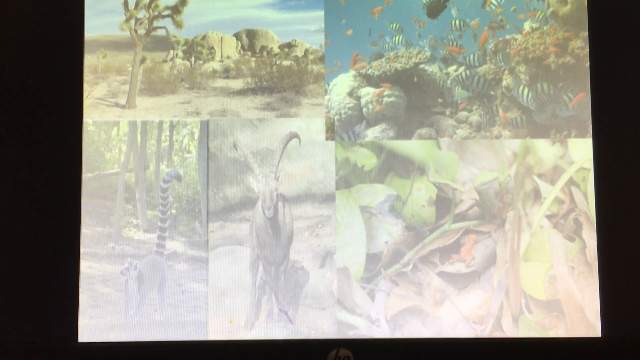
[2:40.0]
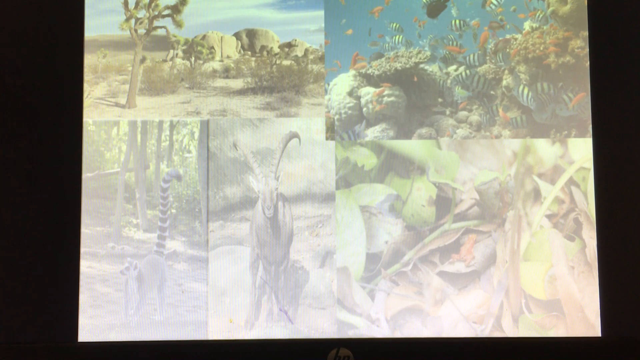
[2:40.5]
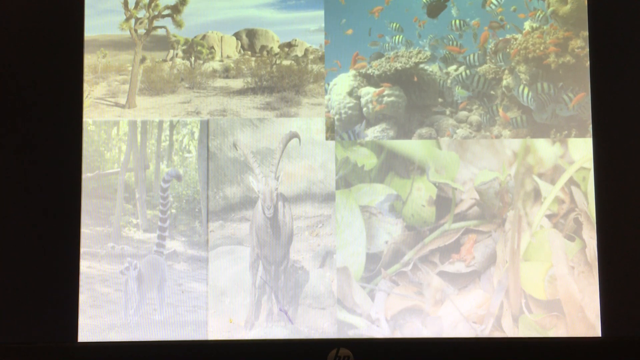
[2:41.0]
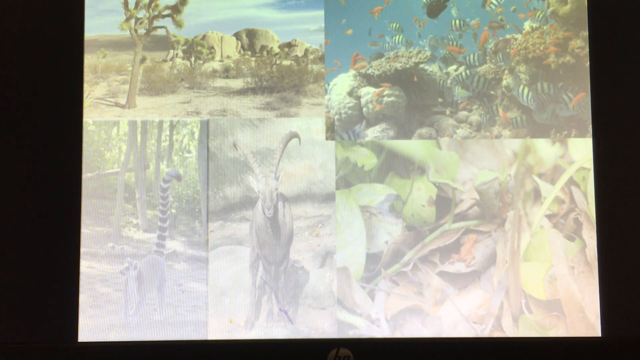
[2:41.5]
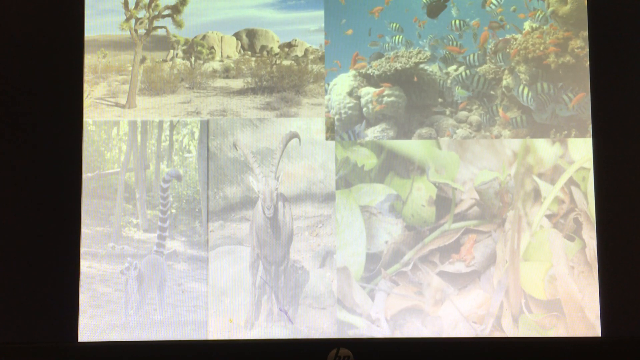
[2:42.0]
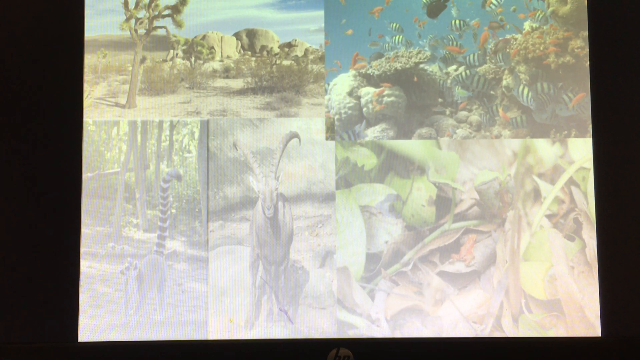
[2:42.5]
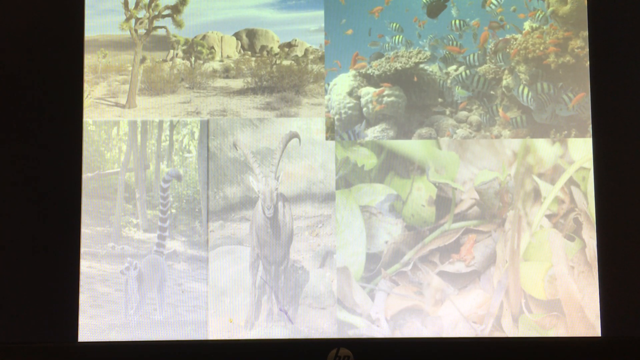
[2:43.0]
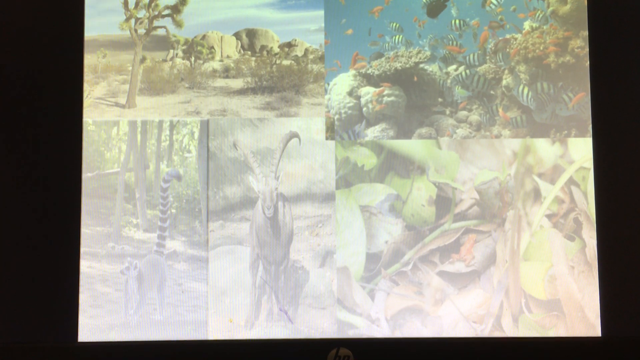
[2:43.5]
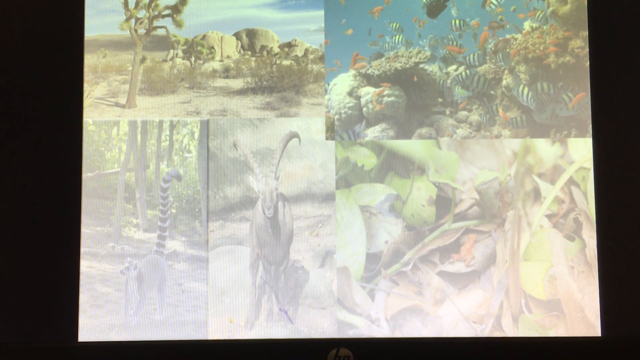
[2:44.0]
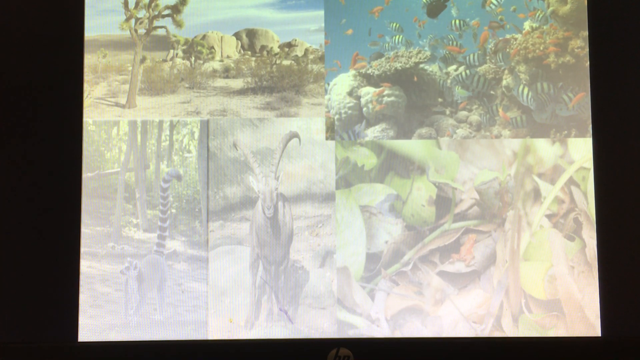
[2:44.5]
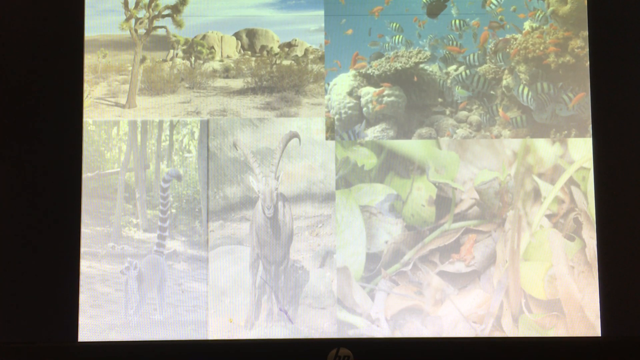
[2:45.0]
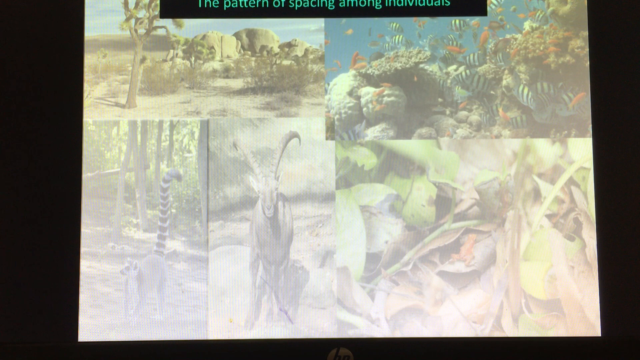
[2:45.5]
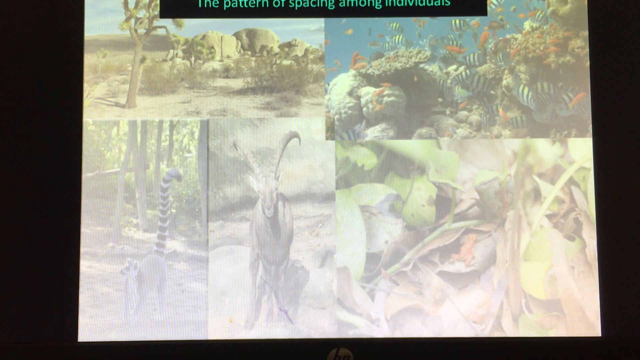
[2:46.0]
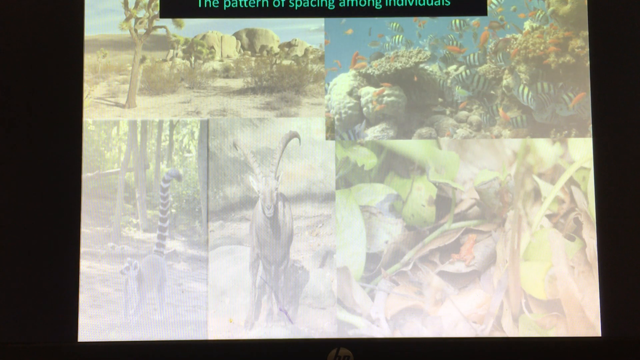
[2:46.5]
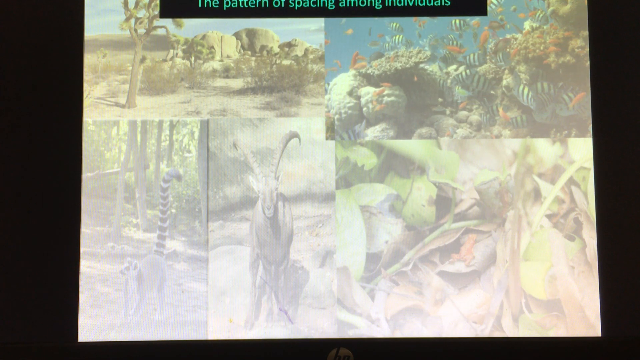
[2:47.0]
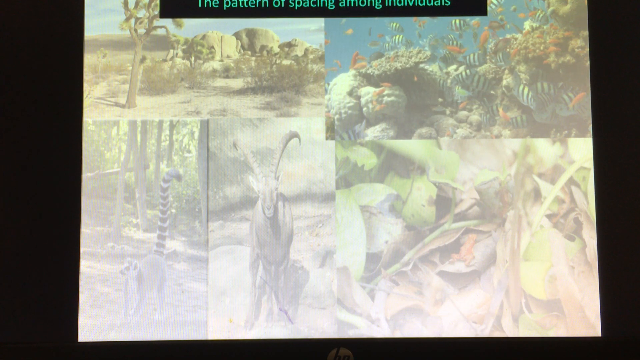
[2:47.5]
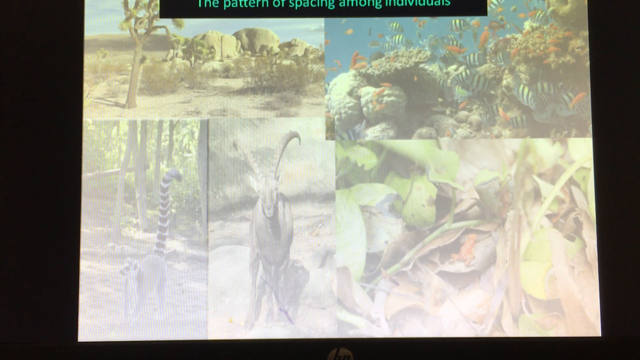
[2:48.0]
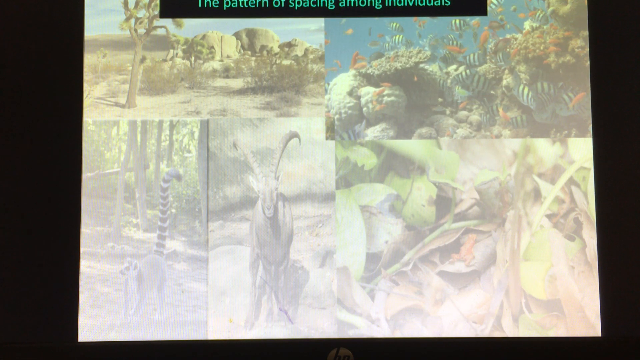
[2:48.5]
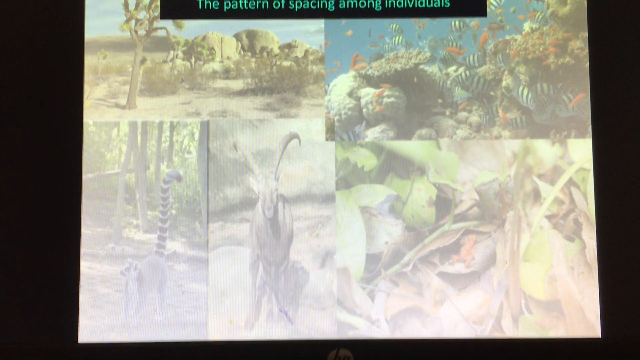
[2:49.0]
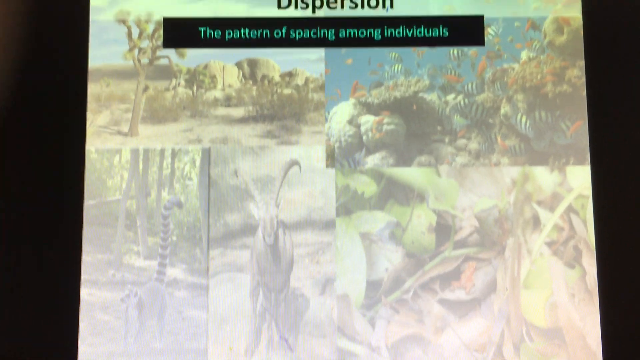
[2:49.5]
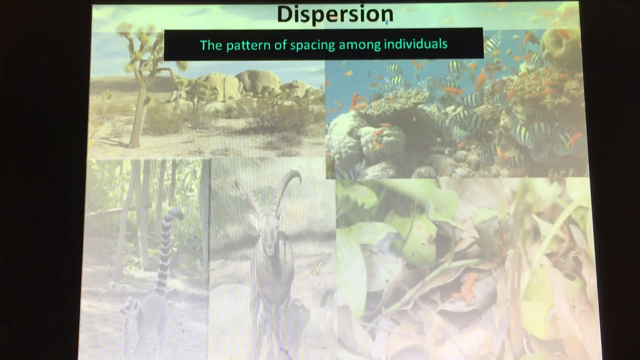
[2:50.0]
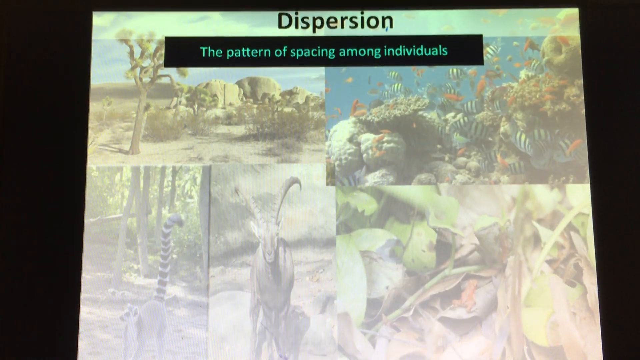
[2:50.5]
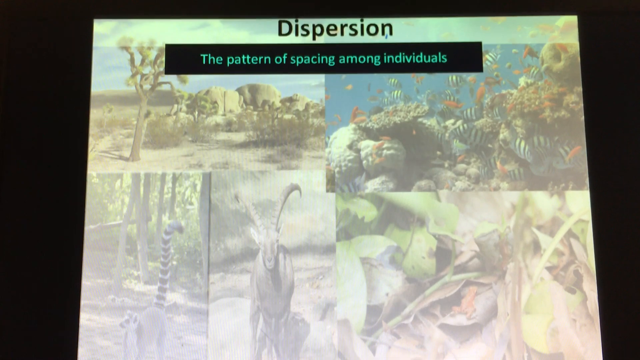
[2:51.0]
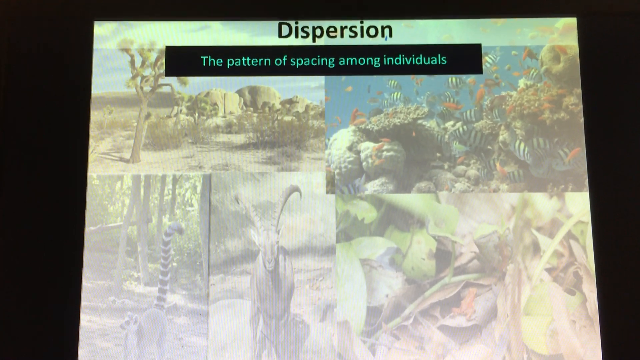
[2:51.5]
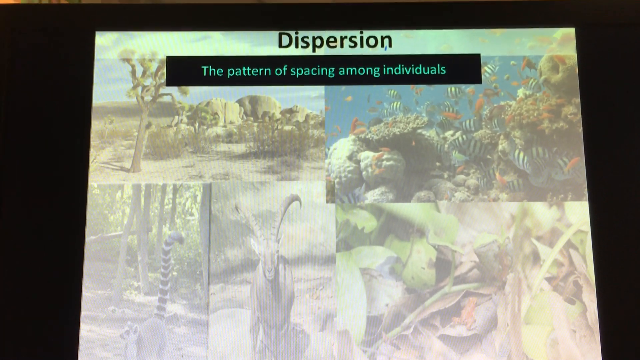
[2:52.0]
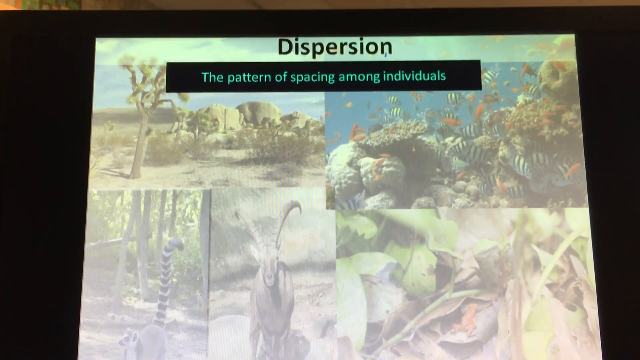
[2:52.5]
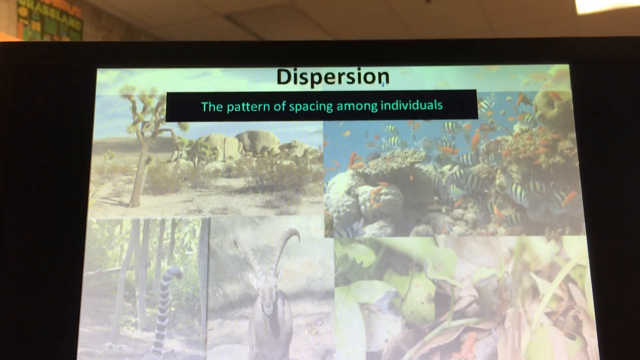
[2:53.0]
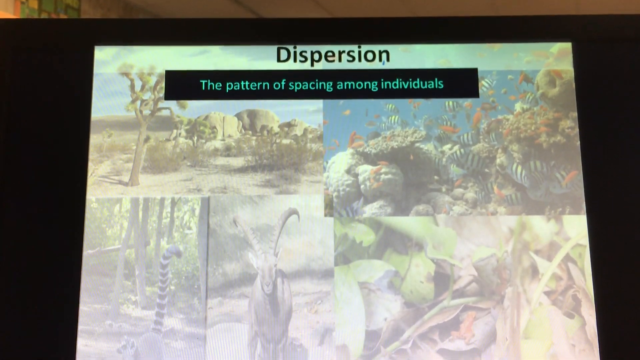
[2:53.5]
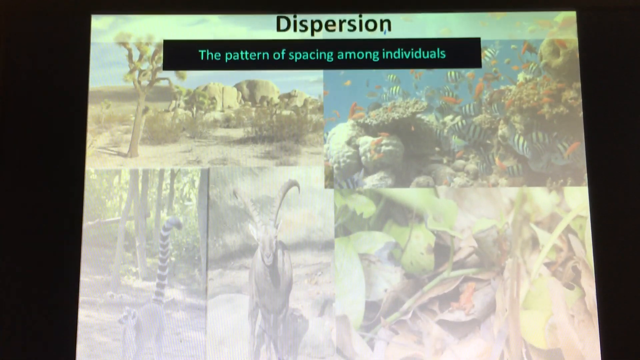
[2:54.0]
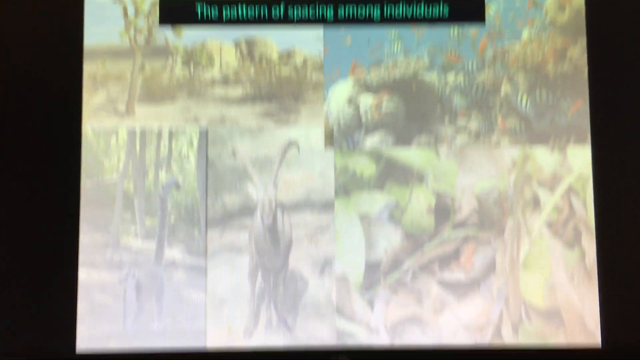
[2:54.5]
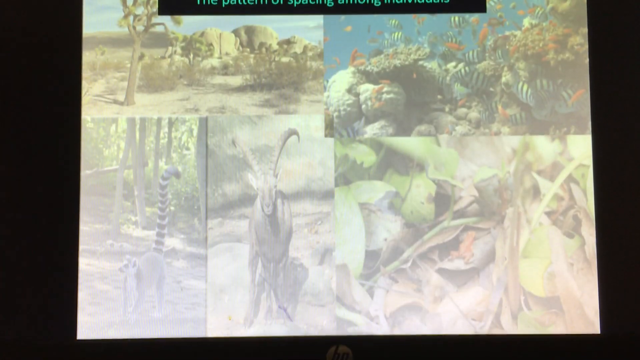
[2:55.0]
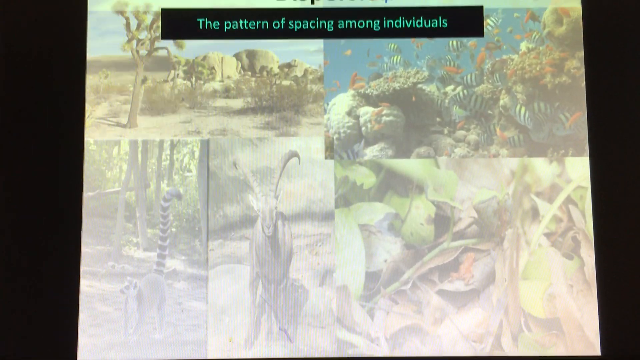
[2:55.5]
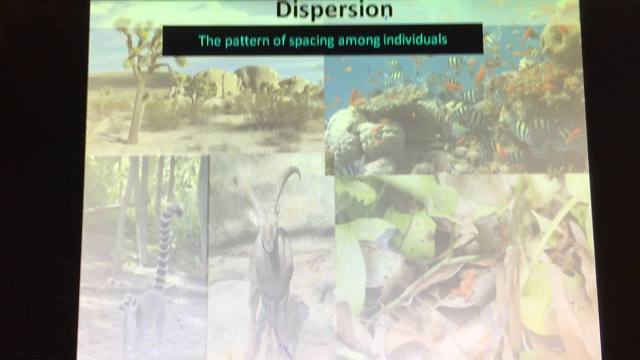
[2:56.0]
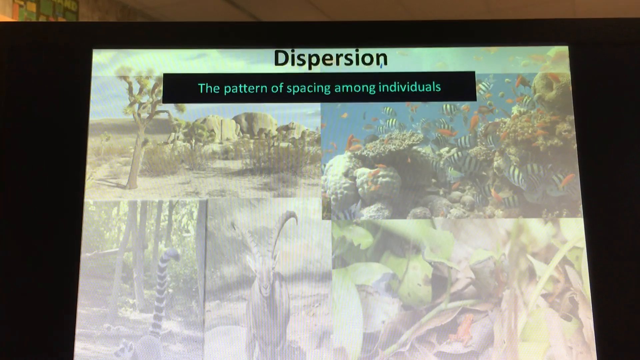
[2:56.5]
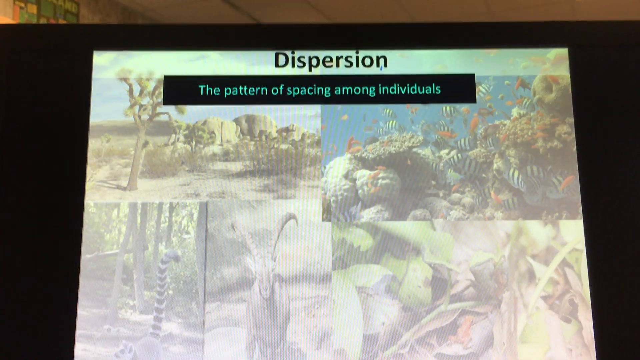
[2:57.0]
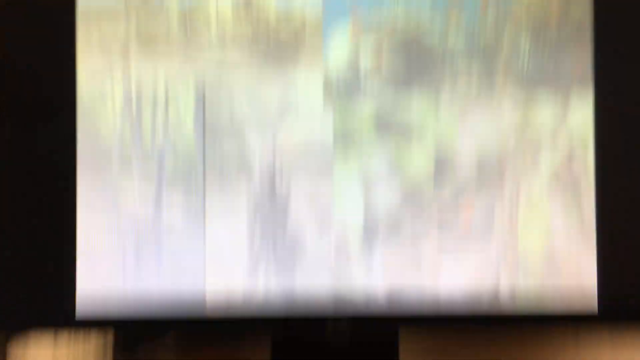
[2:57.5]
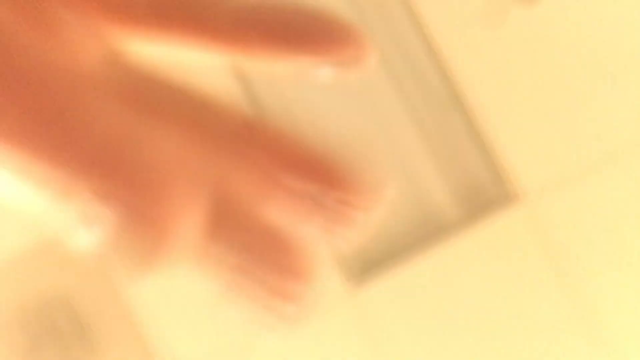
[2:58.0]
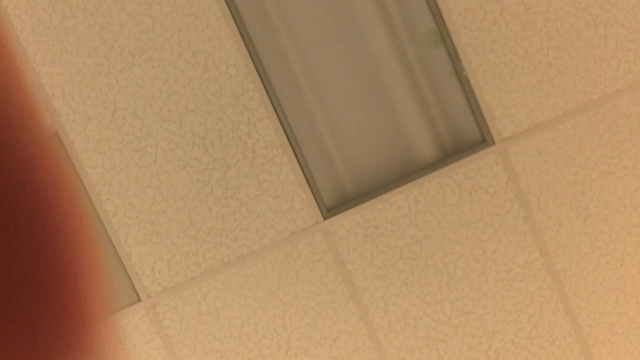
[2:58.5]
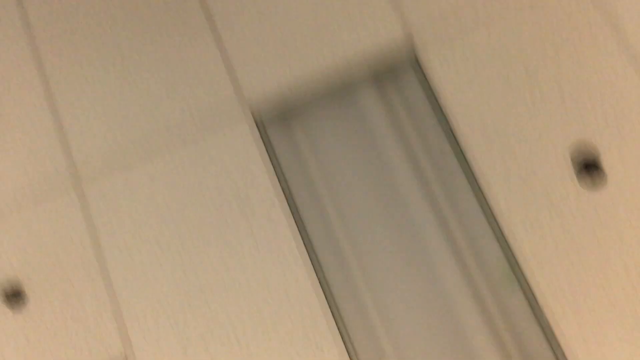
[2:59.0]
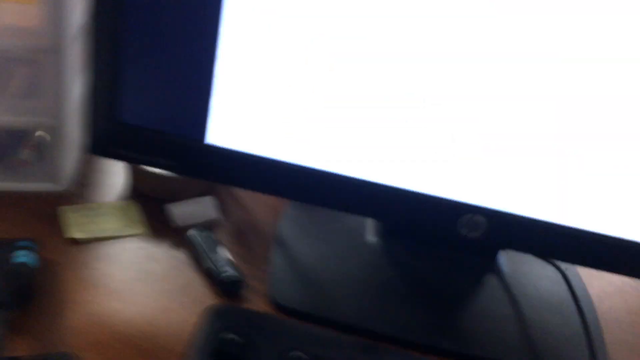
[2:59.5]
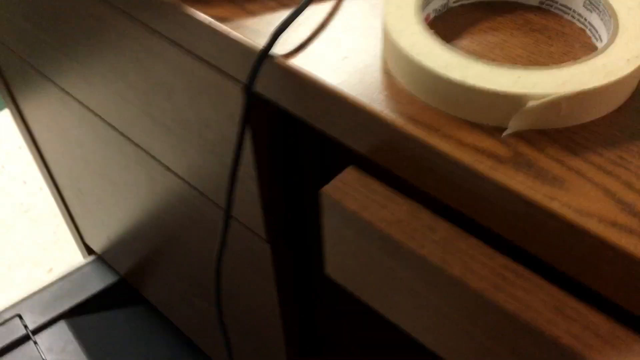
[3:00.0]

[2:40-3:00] The screen shows the background images: a desert scene in the upper left, some sort of monkey in the lower left, a ram or goat in the middle, and apparently some form of lizard in the lower right. There is no movement for a while. At the top is a cut-off statement of which only "the pattern of spacing among individuals" can be read. The camera then pans upward, revealing the top, which says "dispersion. The pattern of spacing among individuals." The camera then moves; it looks like it is recording a computer. The camera falls off, apparently held by somebody, and the final part of the recording shows somebody's desk with masking tape in the upper right corner and an electrical cord going down the middle.